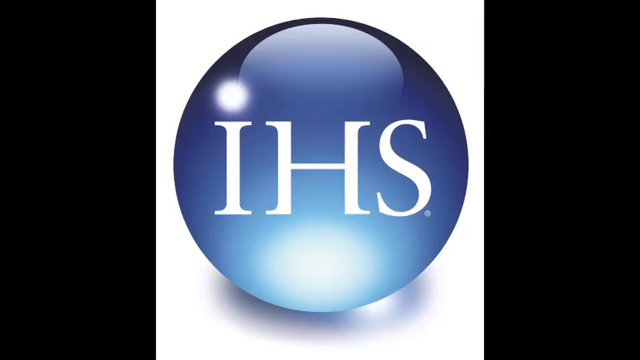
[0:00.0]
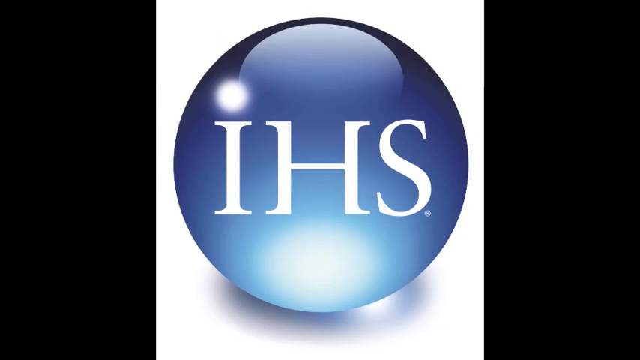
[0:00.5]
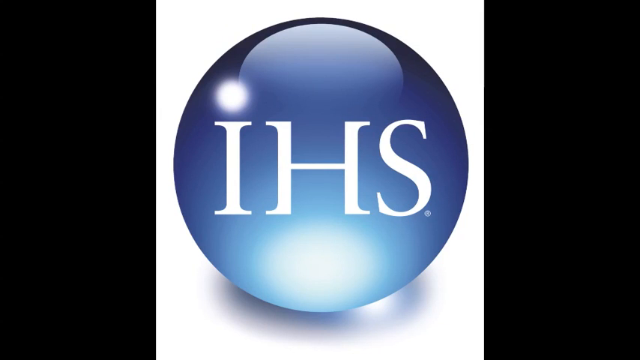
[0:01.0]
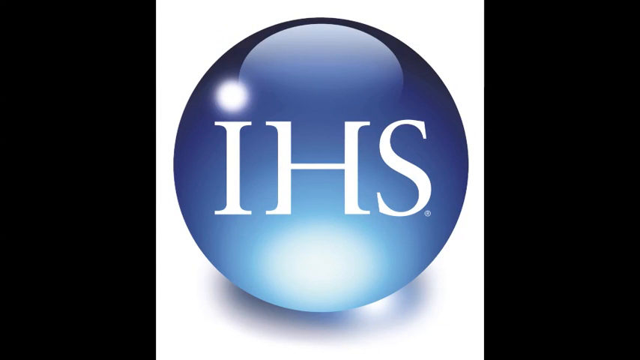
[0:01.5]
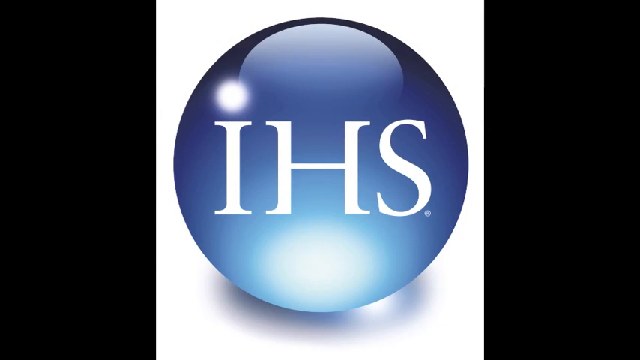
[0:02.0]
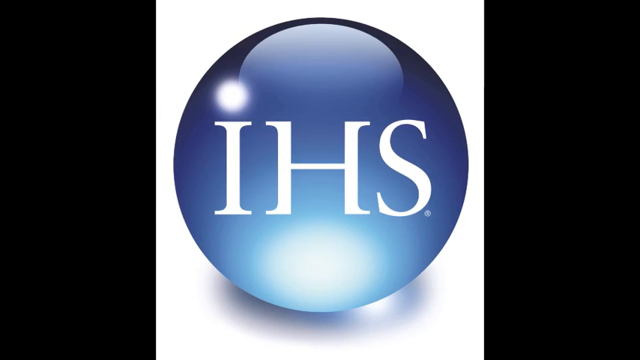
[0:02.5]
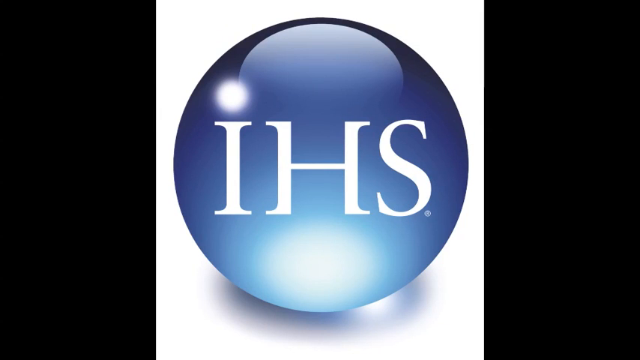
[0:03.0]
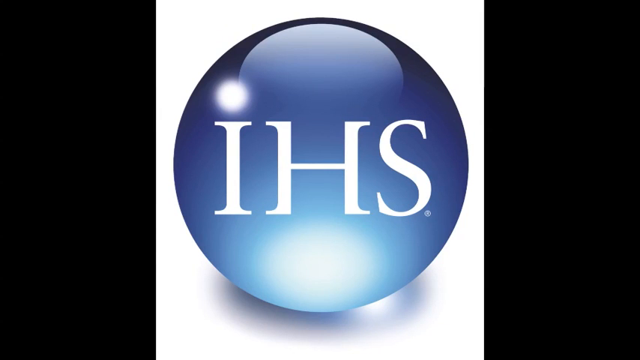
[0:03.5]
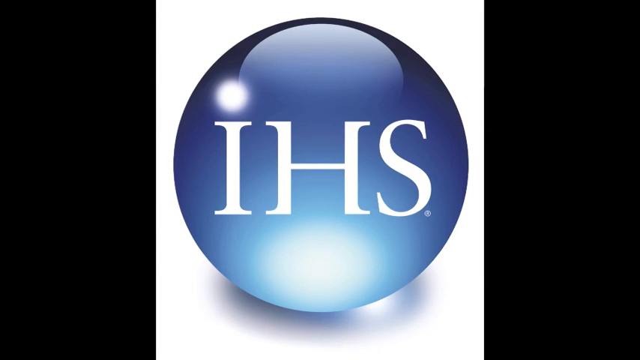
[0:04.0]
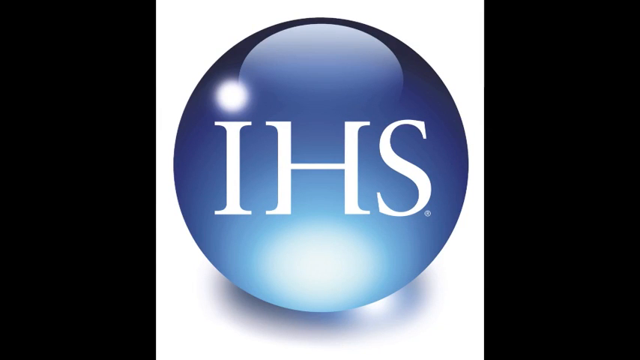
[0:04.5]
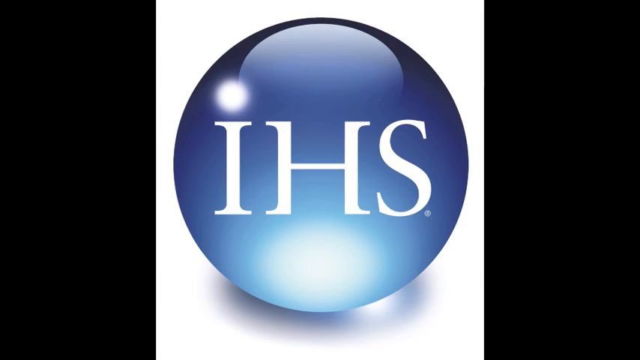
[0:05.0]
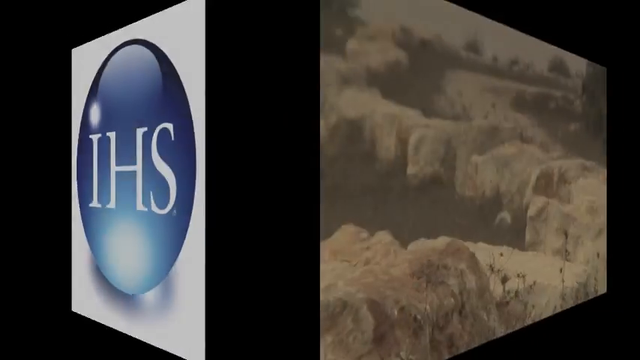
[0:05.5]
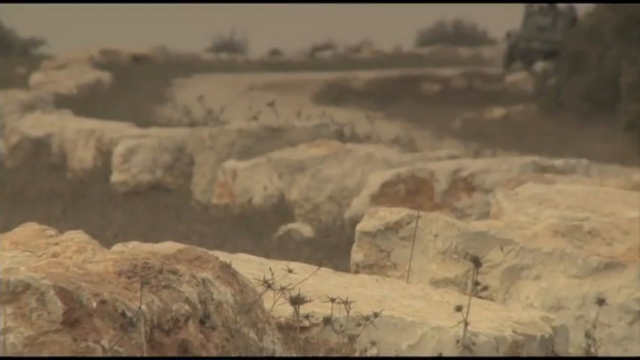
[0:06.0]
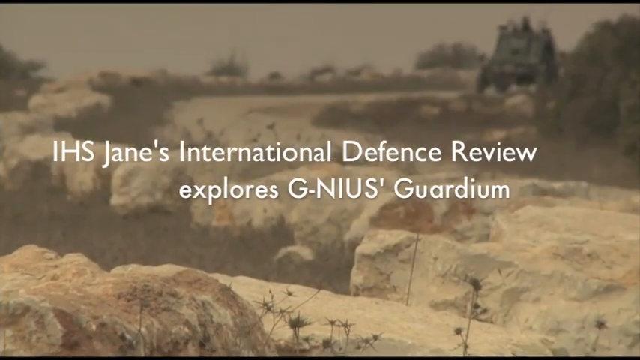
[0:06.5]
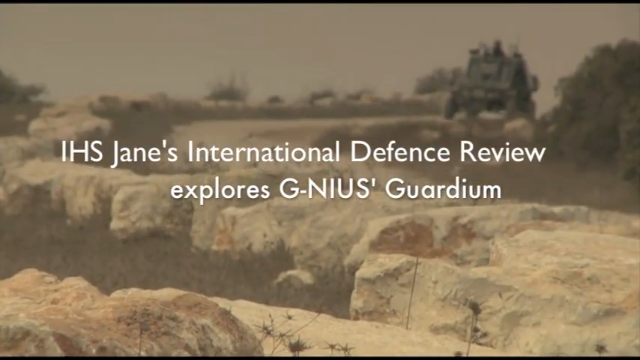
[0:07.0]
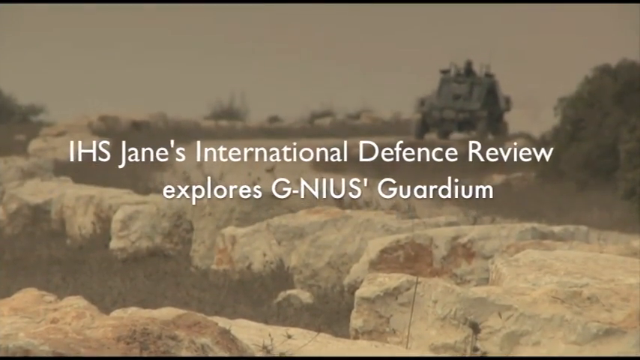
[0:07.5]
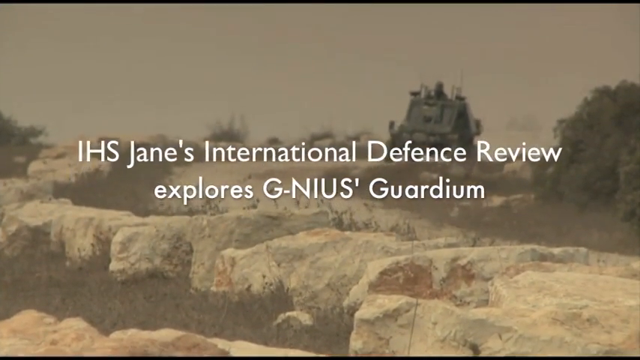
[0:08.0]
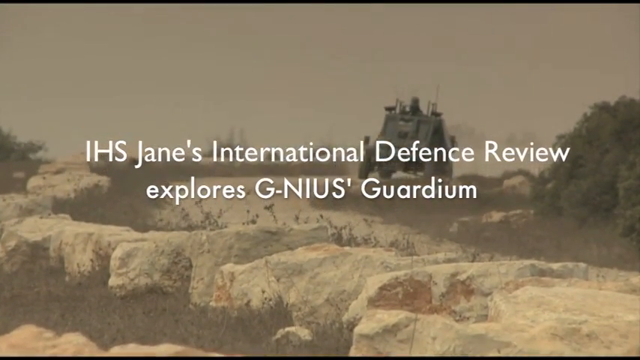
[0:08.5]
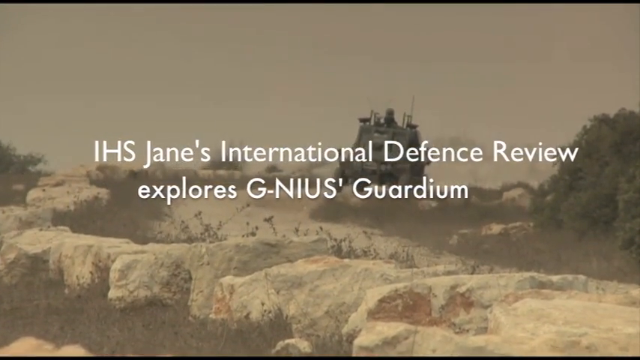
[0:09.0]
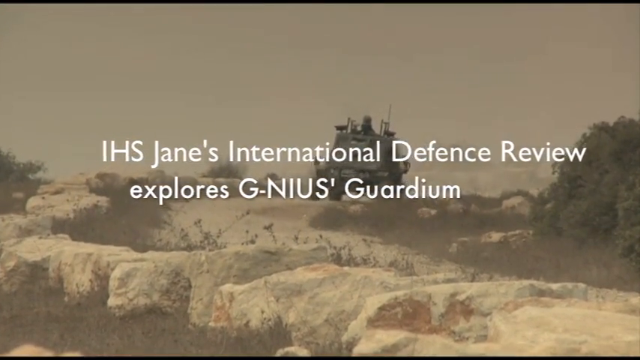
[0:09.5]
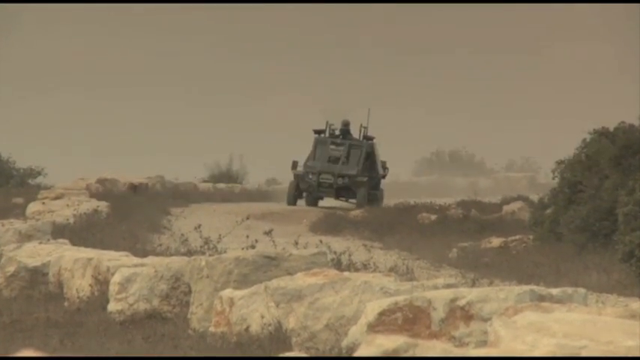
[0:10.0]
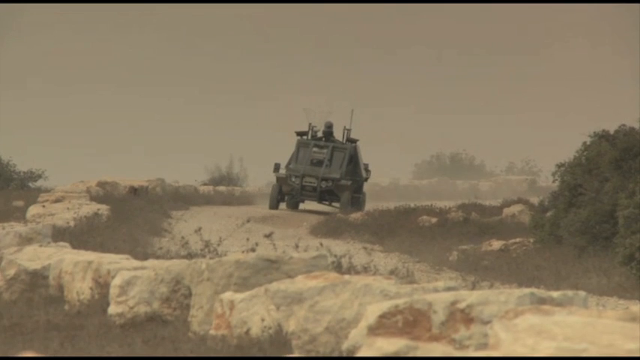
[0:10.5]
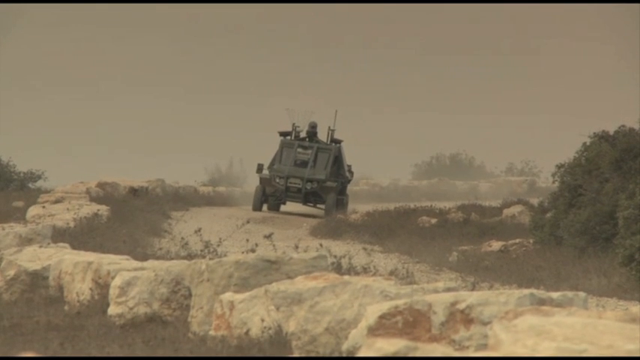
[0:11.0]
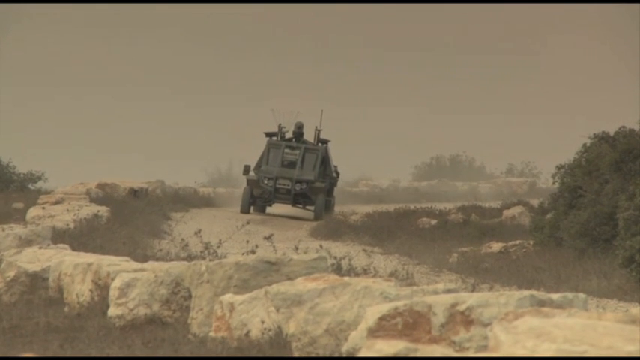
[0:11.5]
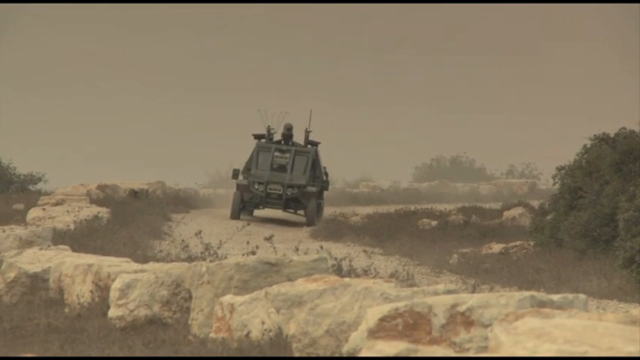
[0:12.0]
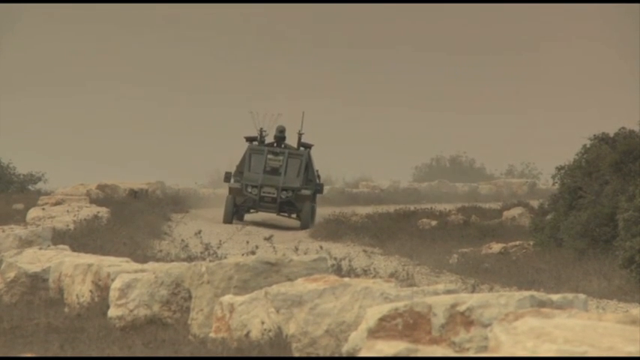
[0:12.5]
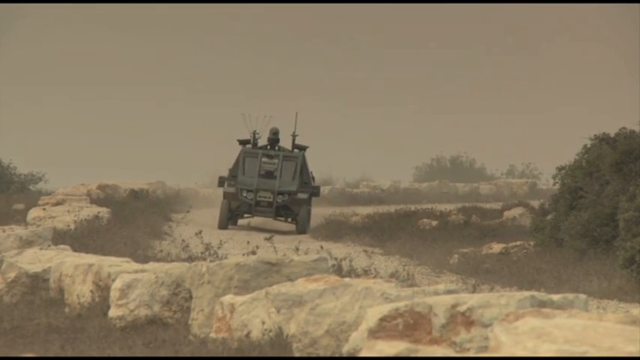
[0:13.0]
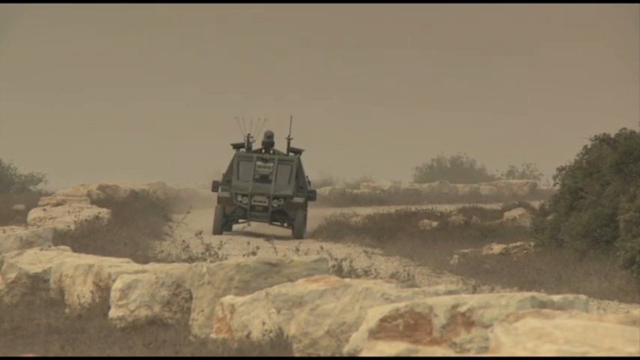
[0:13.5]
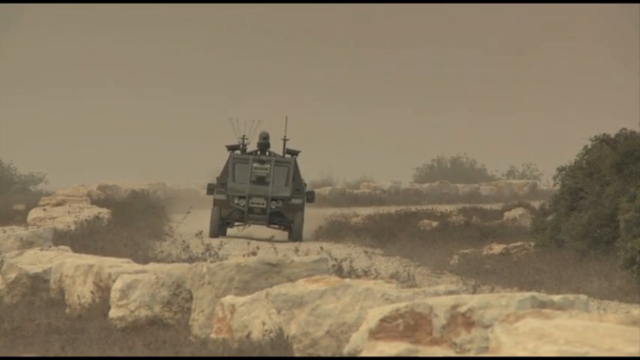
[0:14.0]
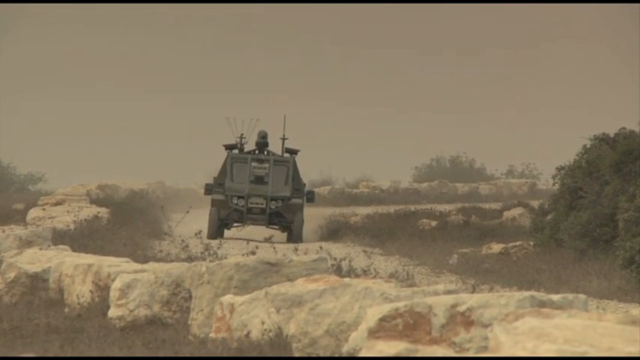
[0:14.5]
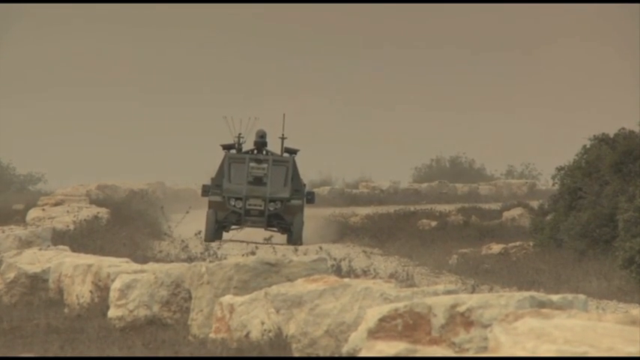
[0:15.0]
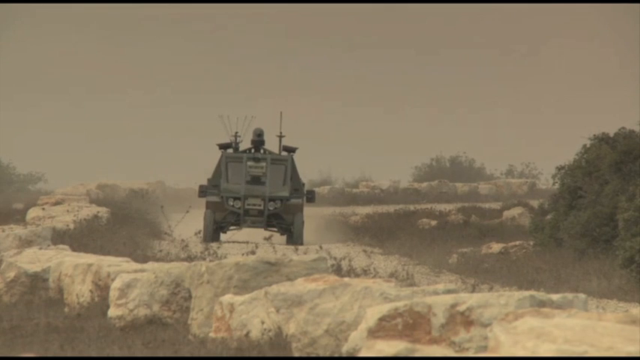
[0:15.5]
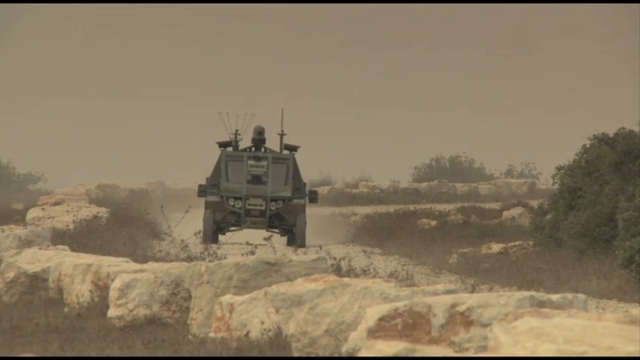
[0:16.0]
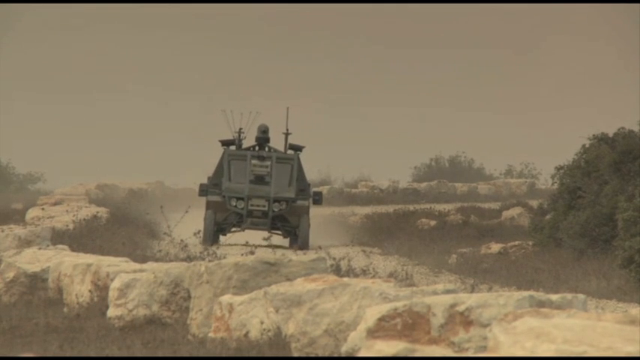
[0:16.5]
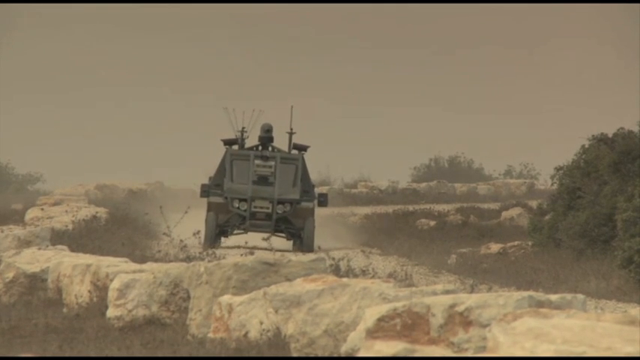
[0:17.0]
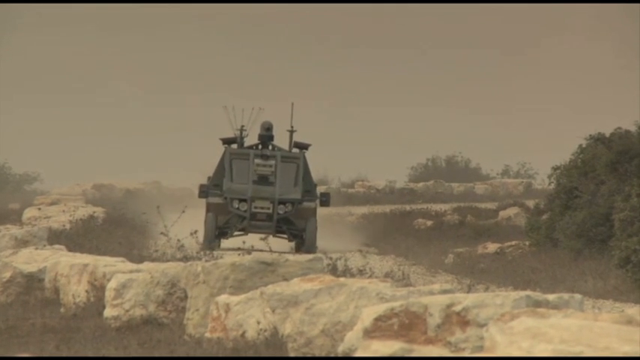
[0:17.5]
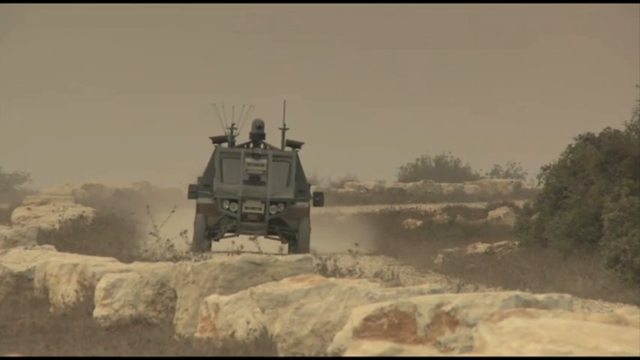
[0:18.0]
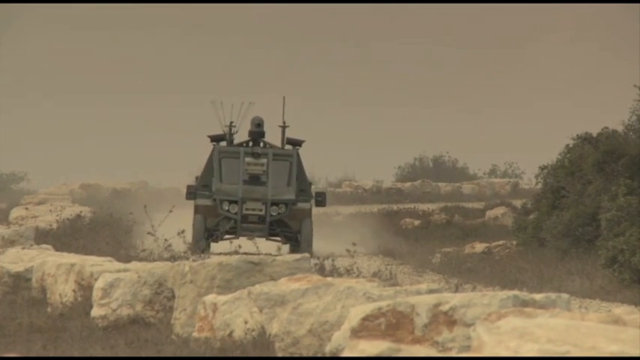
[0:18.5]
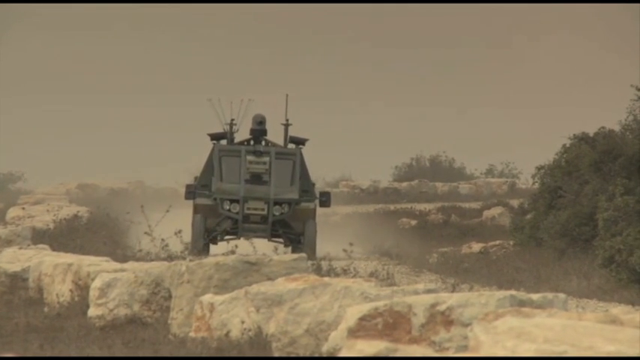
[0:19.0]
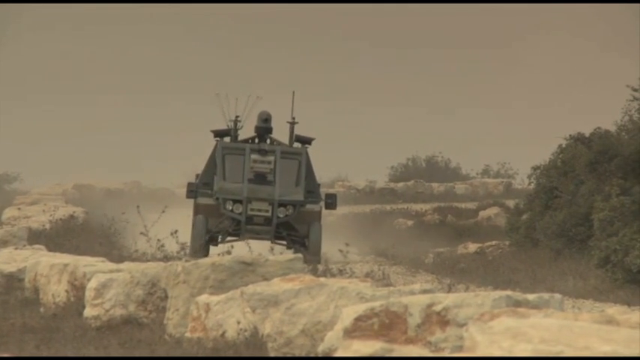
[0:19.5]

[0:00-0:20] What seems to be a brand name appears in short form, with the capital letters I-H-S. The rest of the background shows a round ball or sphere that looks very detailed and shiny, colored light blue, white, and a darker blue at the outline. The video then shows what seems to be a war zone, along with IHS Jane's International Defense Review, which explores the genius guardian. A very dusty road appears, and a military truck or car seems to be riding down this dusty path. It is armed with guns, looks a bit skinny, and has a lot of weapons attached to it, more like knives and pointy things. The vehicle is greenish in color. The sky does not look clear at all; it looks a dirty brown color.